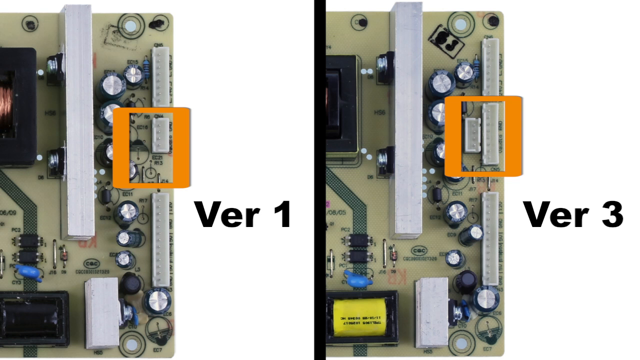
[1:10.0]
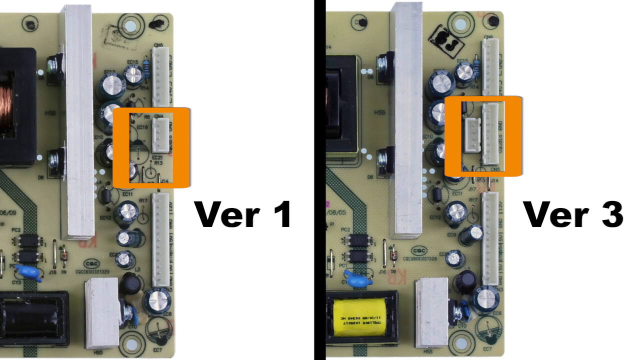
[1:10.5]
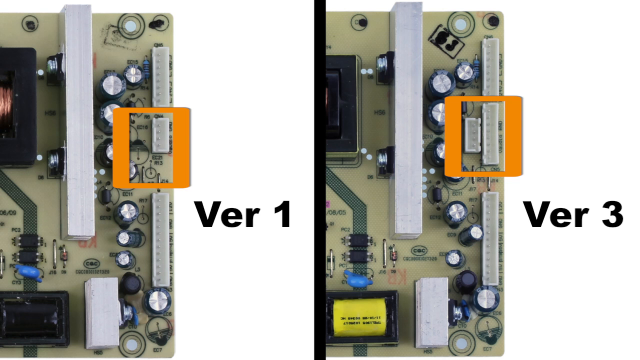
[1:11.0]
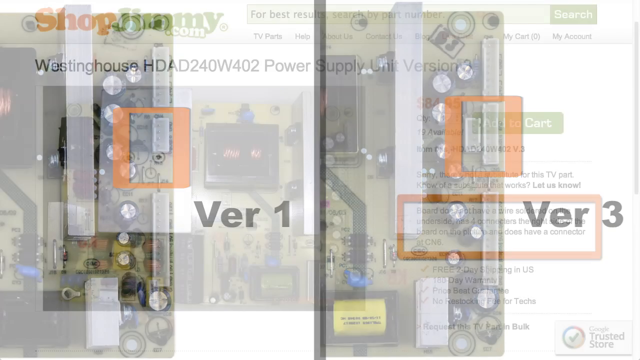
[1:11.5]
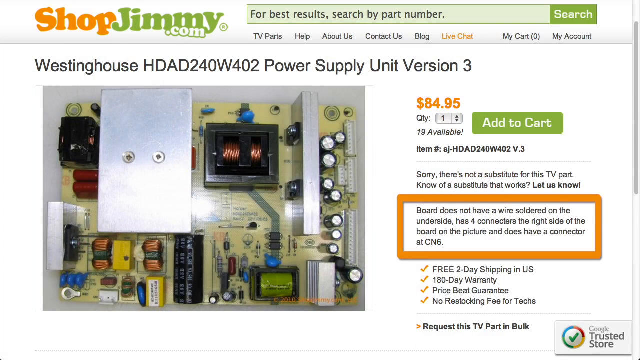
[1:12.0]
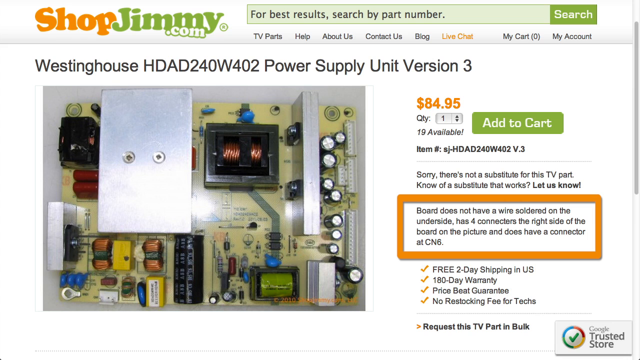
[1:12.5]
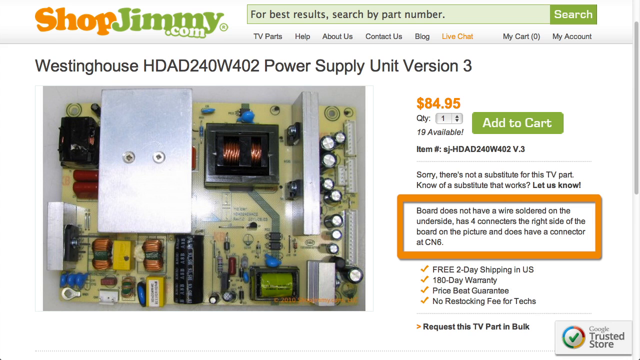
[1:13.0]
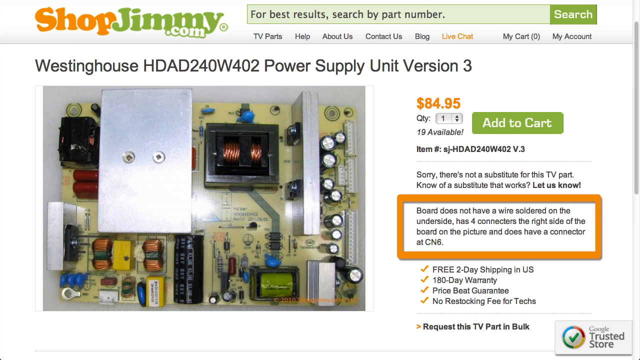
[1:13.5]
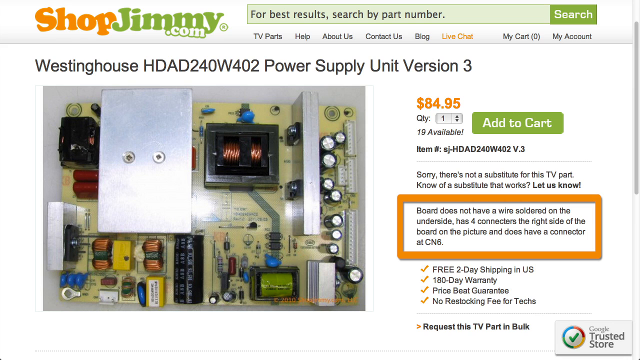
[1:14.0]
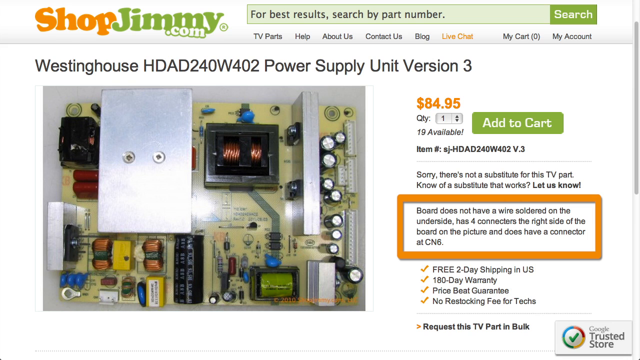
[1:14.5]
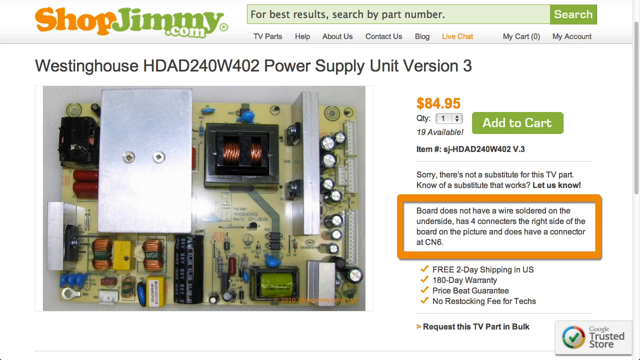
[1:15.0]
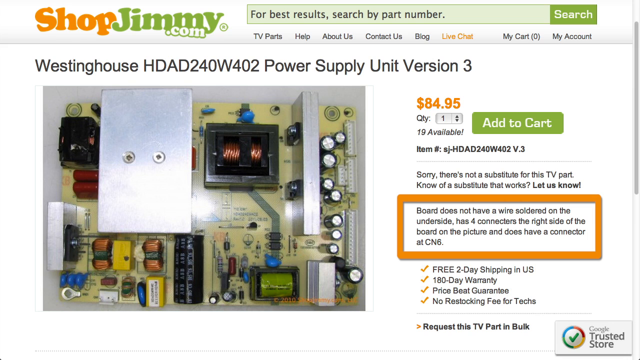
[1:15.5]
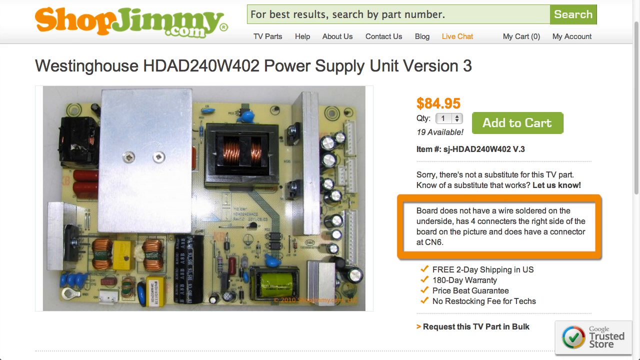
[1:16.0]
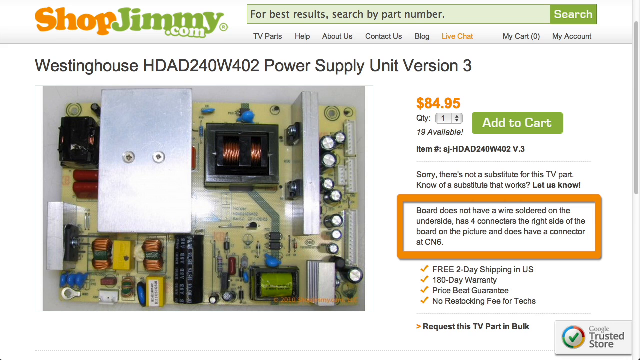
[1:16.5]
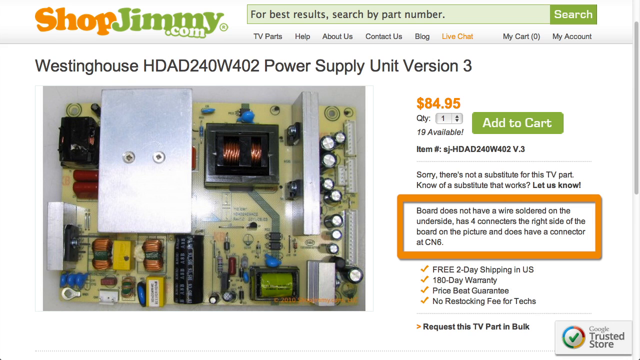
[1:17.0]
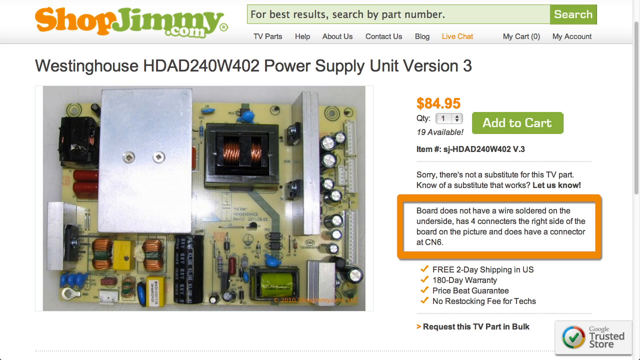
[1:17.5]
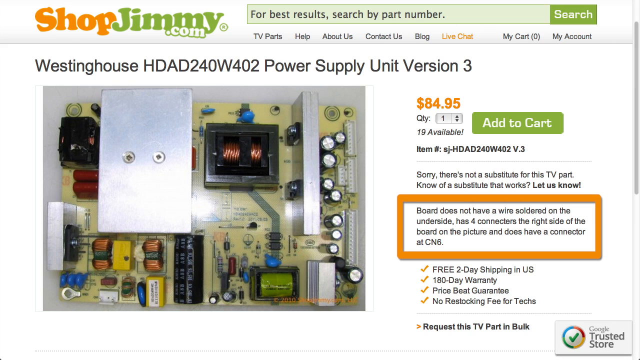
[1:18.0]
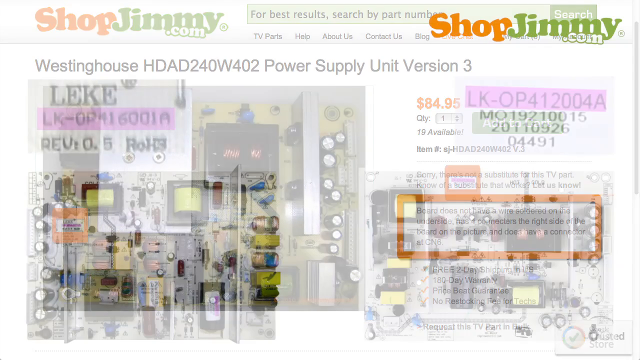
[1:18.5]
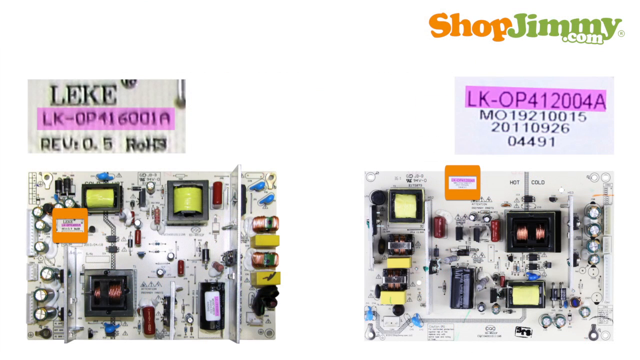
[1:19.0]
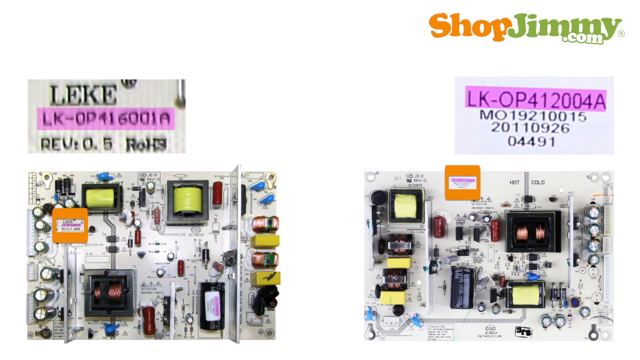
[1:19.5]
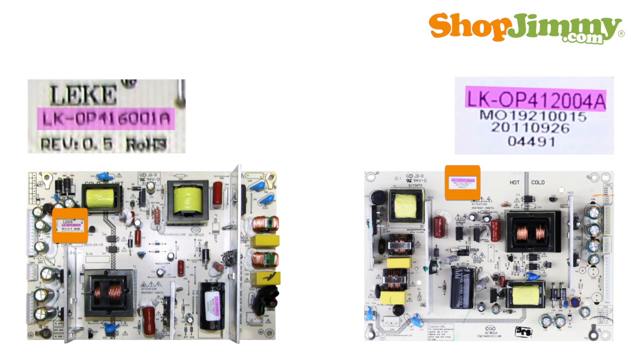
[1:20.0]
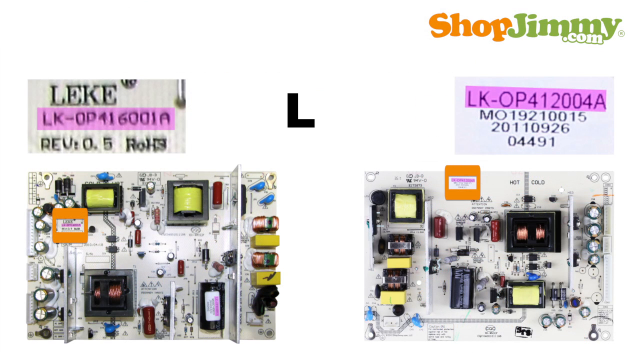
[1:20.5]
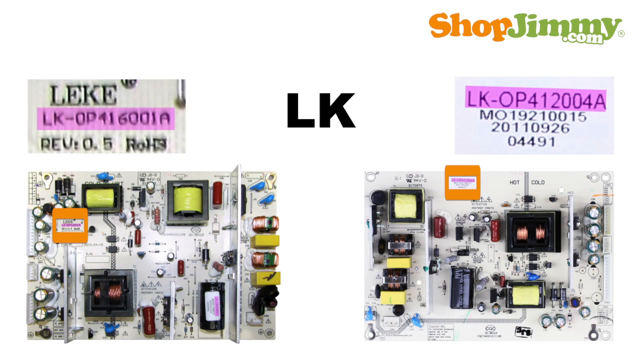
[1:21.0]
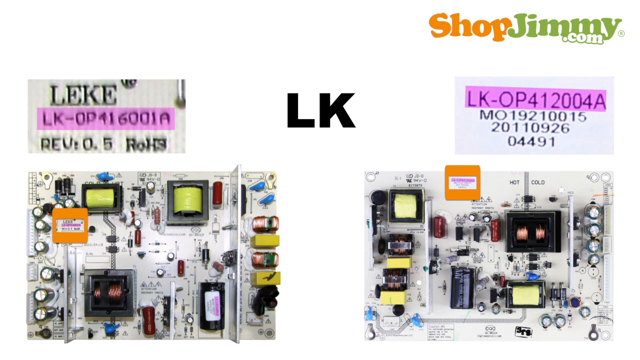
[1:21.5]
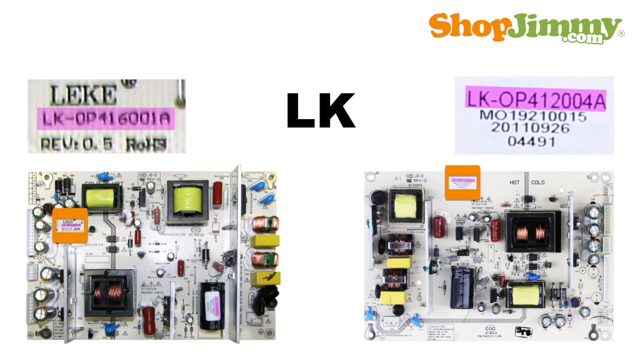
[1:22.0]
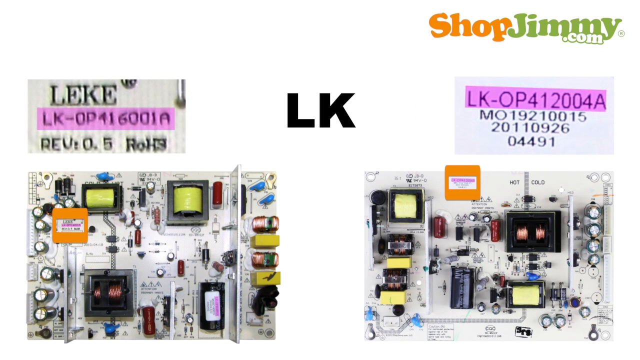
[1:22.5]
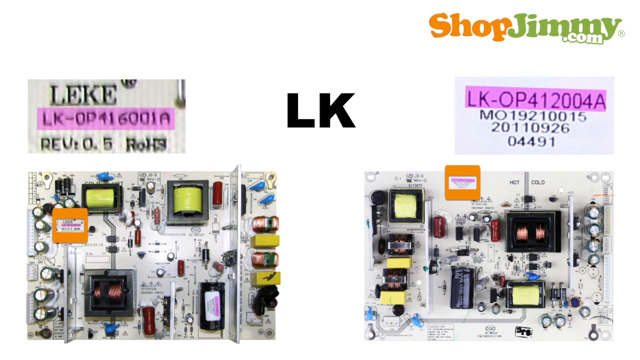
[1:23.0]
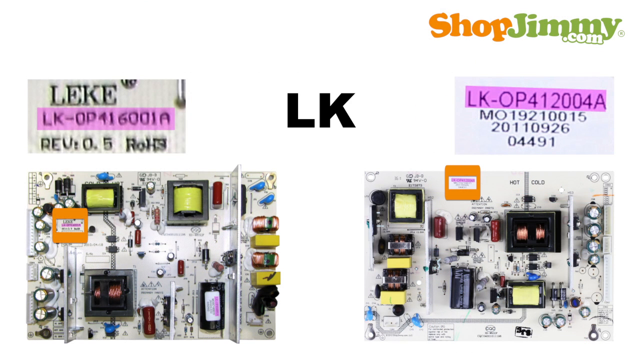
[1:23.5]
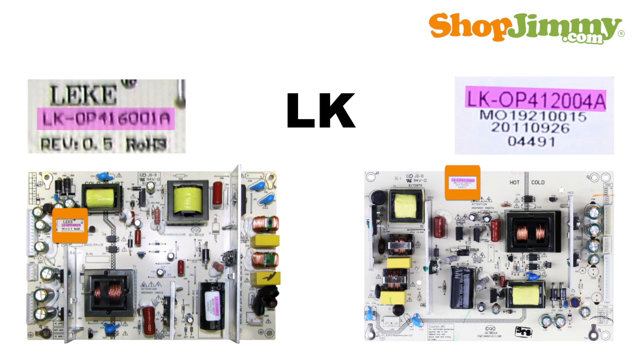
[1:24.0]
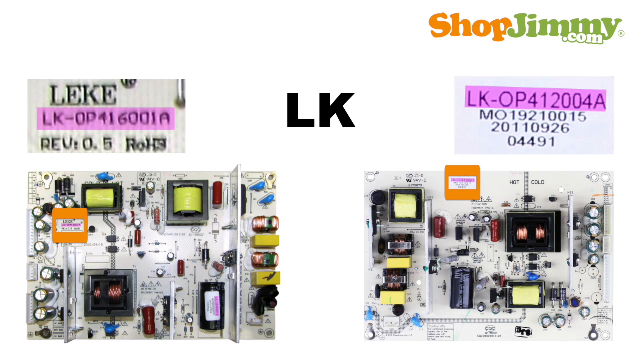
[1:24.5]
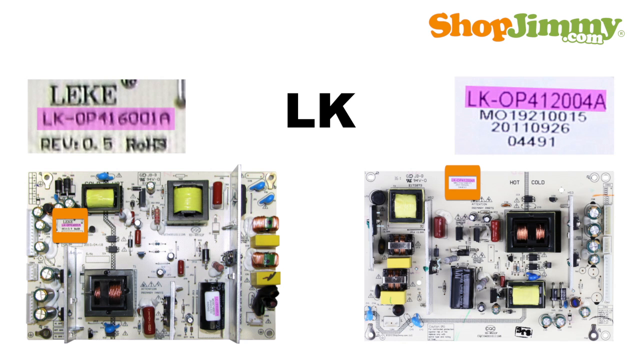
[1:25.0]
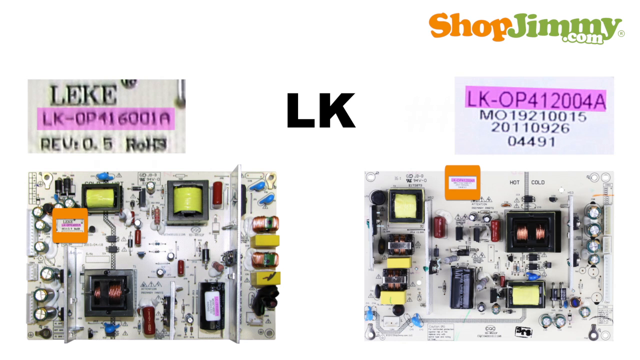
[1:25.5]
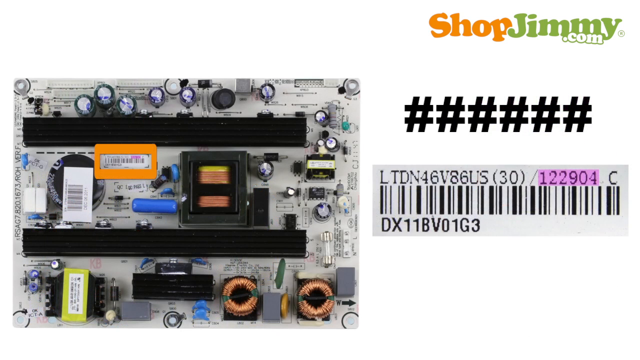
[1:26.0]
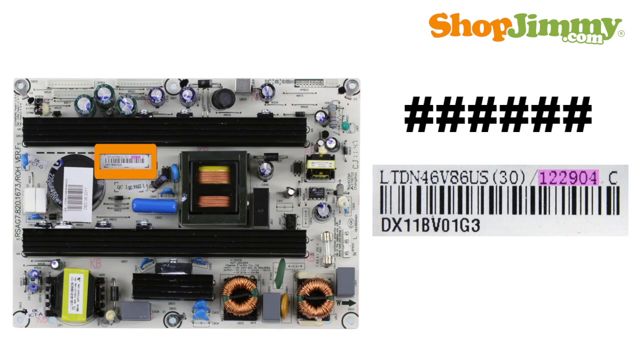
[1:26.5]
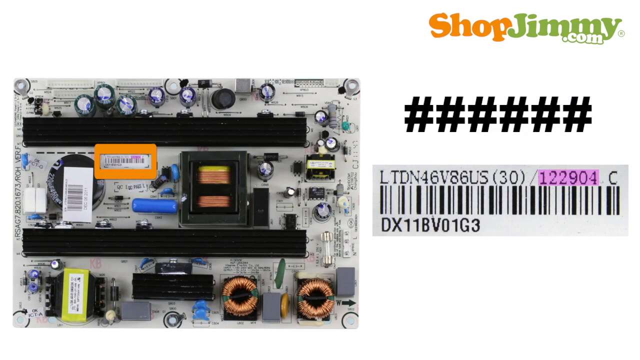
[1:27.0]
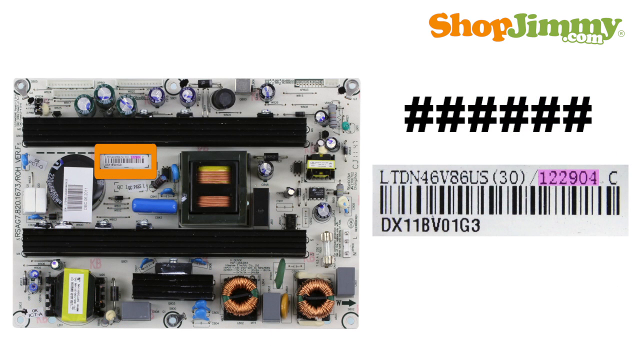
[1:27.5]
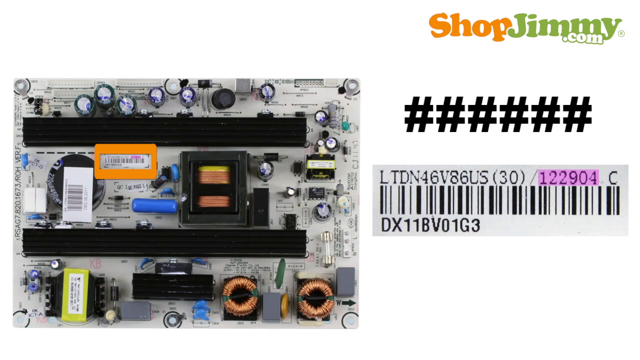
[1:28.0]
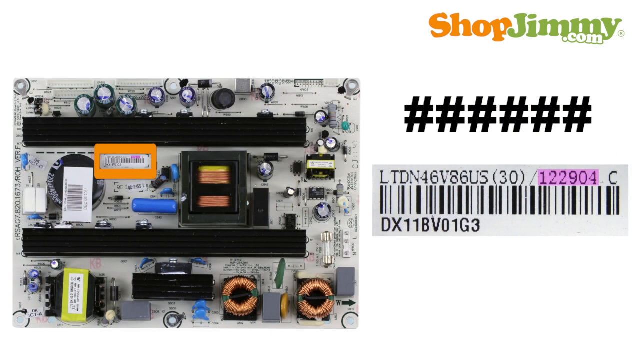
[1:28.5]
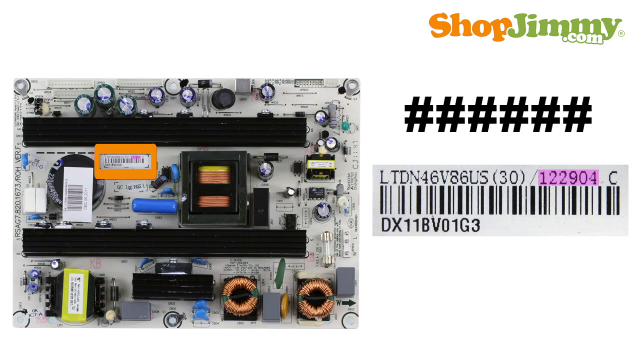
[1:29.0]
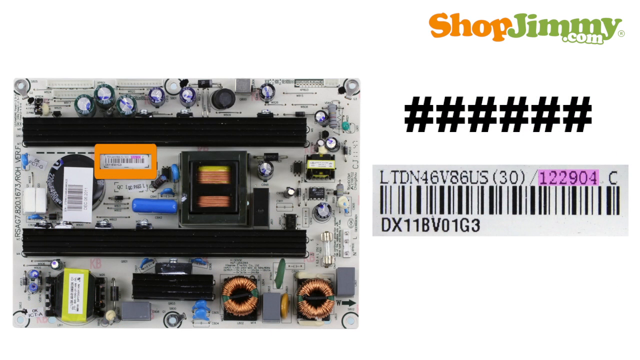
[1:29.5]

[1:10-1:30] Two photos of the same motherboard in different versions are shown side by side, the left labeled "version 1" and the right labeled "version 3". Version 3, on the right, has one additional plug, marked with an orange rectangle. The video cuts to a shopjimmy.com webpage with a listing for version 3 of that motherboard, priced at $84.95, with an add to cart button and a quantity ticker next to it. The item number reads "SJ-HDAD240W402 version 0.3". Text underneath on the listing reads "sorry there's not a substitute for this TV part. Know of a substitute that works? Let us know. Board does not have a wire soldered on the underside, has four connectors on the right side of the board on the picture, and does have a connector at CN6. Free 2-day shipping in the US, 180-day warranty, price beat guarantee", and further text reads "Request this TV part in bulk." The listing includes a photo of the part lying on a gray work surface. The video then cuts to two photographs of similar-looking but different motherboards, both white boards with various transistors and parts built into them. The left one has a different model number than the right one, shown by zoomed-in photos of the model numbers above both side-by-side motherboards.